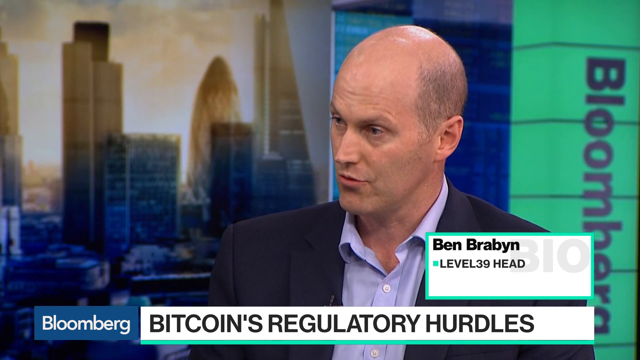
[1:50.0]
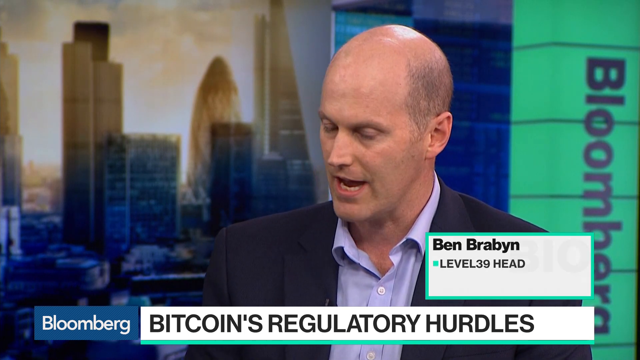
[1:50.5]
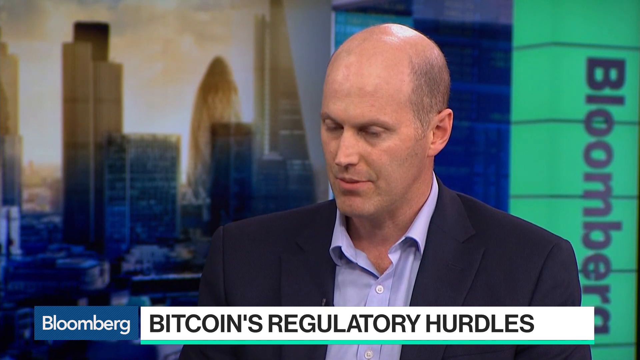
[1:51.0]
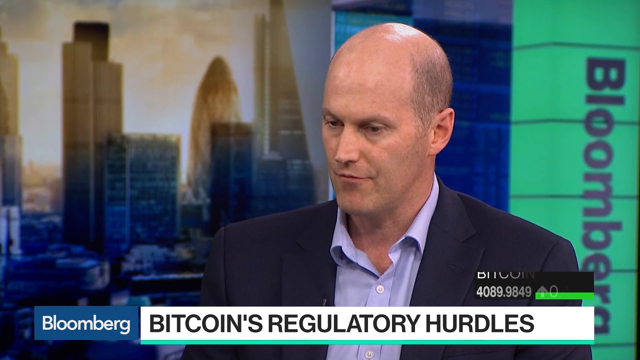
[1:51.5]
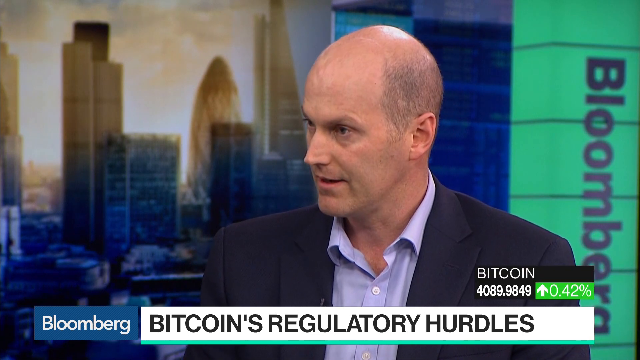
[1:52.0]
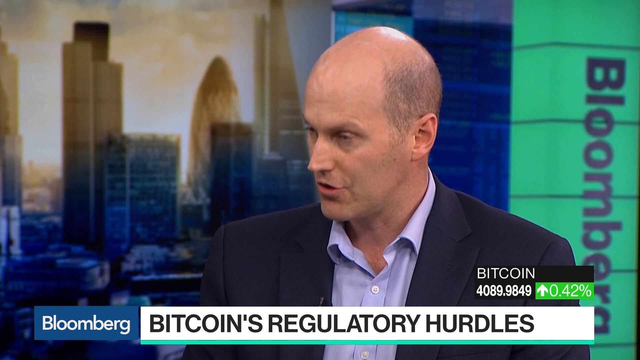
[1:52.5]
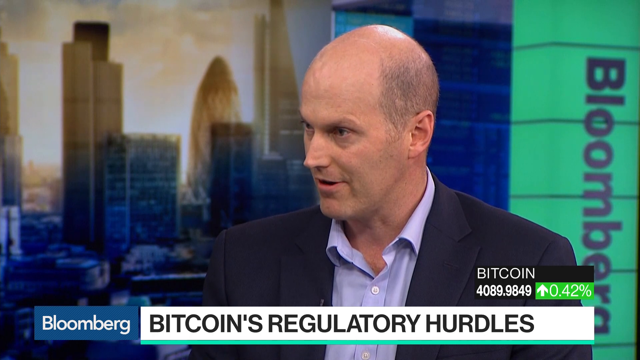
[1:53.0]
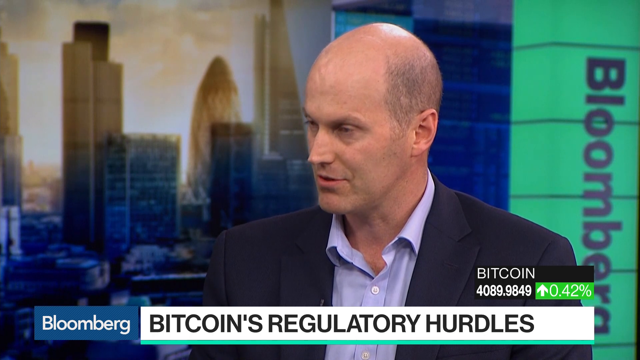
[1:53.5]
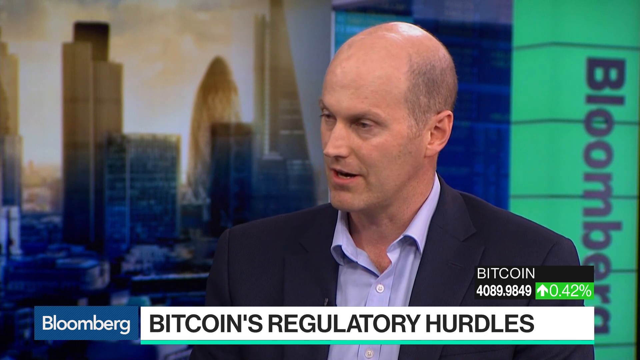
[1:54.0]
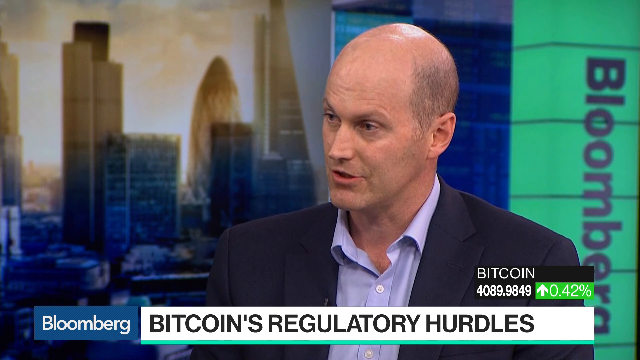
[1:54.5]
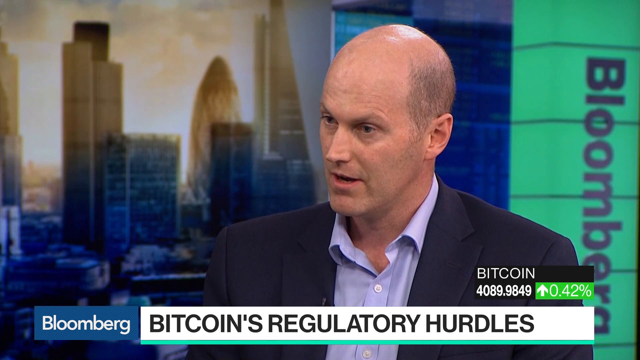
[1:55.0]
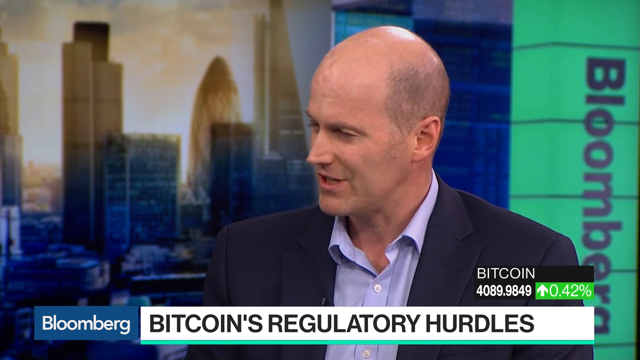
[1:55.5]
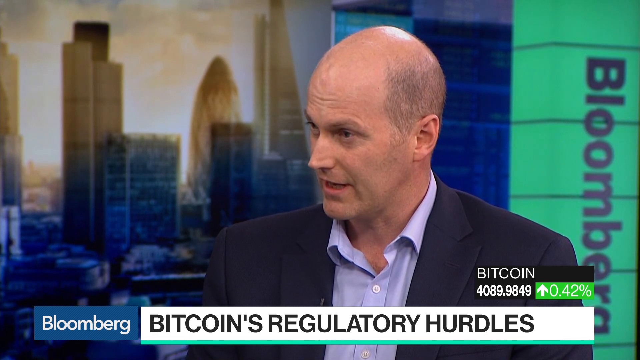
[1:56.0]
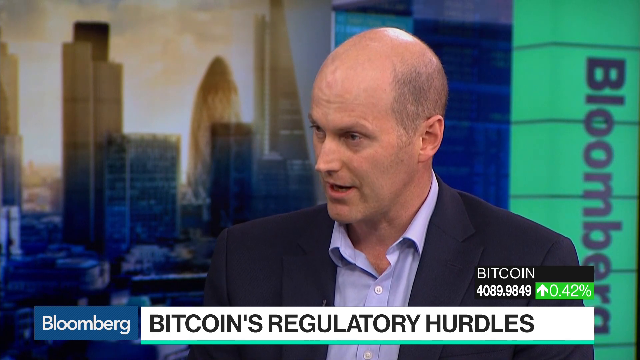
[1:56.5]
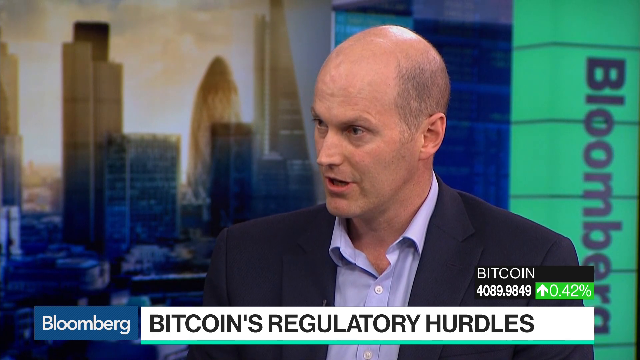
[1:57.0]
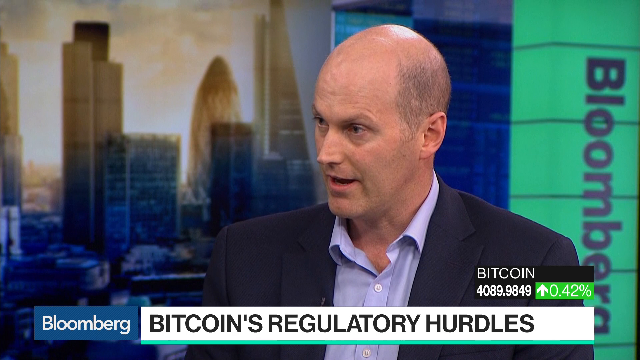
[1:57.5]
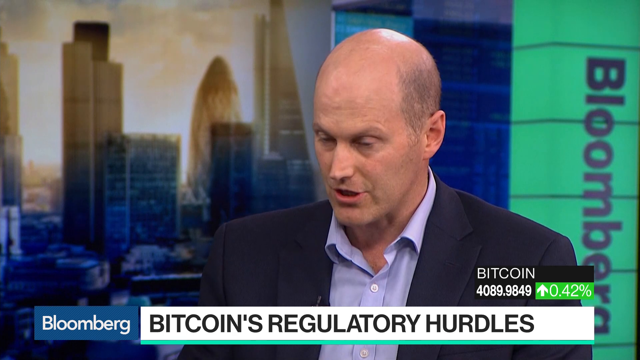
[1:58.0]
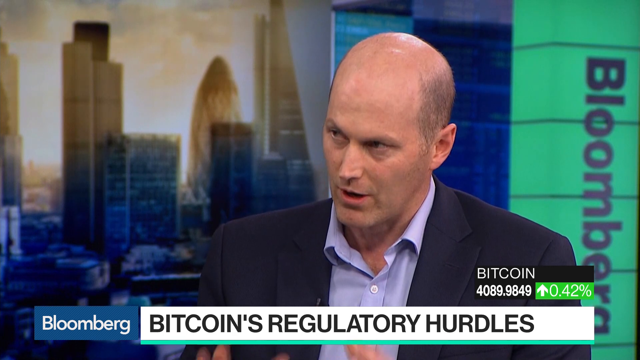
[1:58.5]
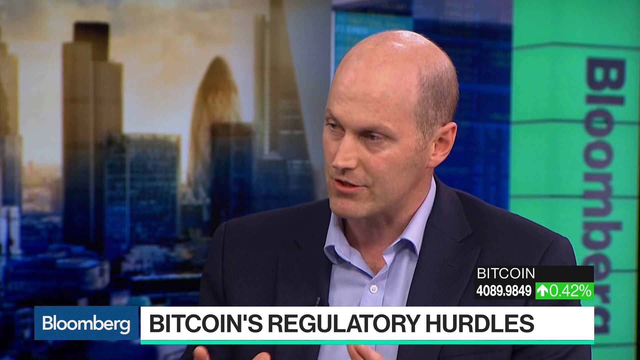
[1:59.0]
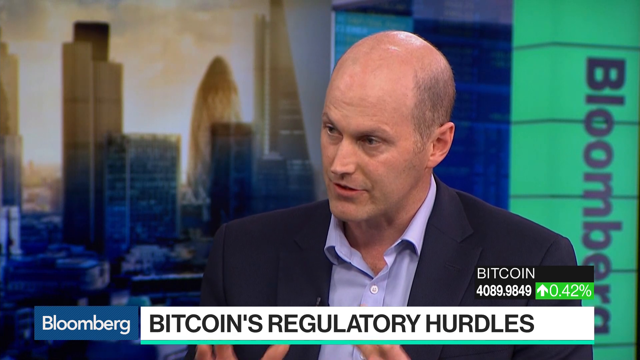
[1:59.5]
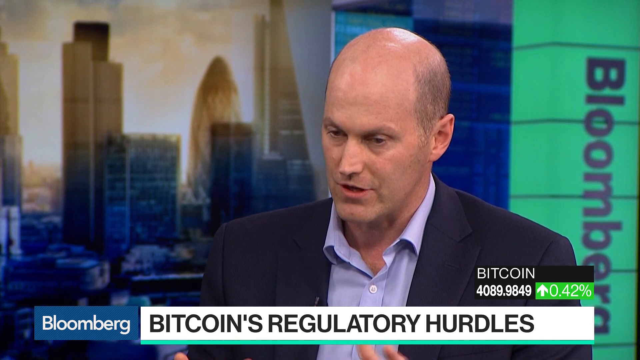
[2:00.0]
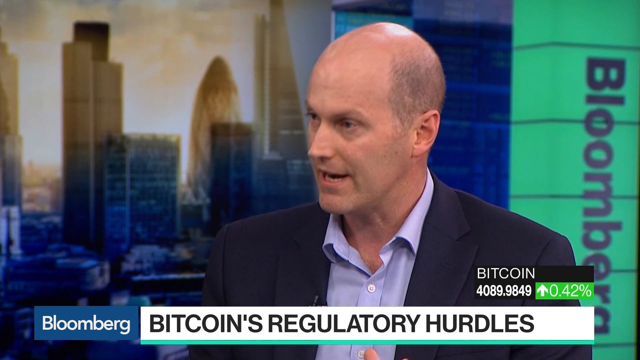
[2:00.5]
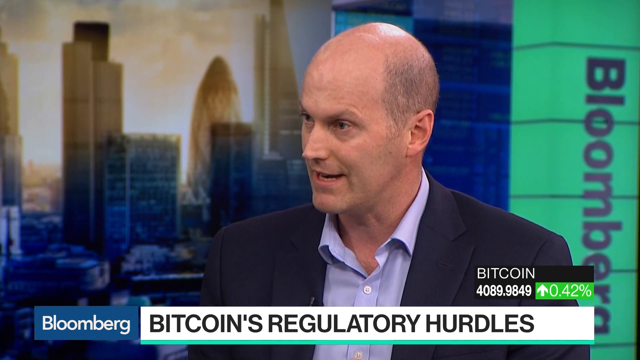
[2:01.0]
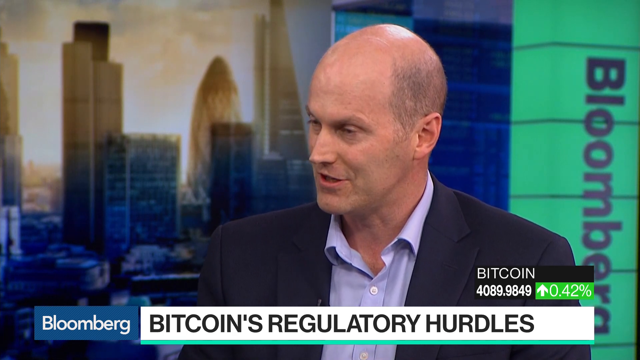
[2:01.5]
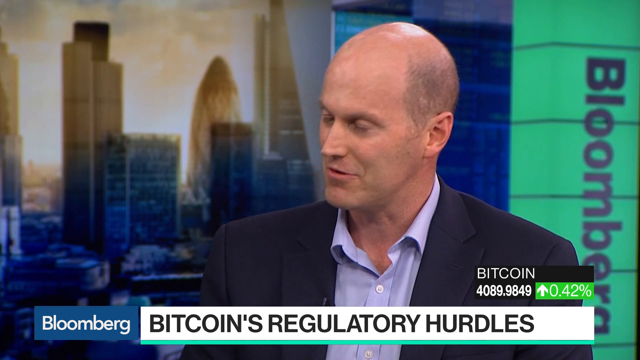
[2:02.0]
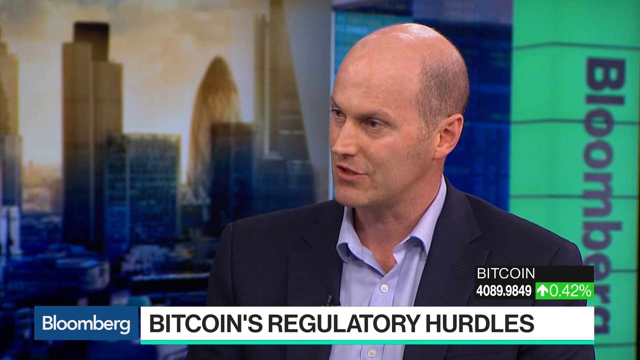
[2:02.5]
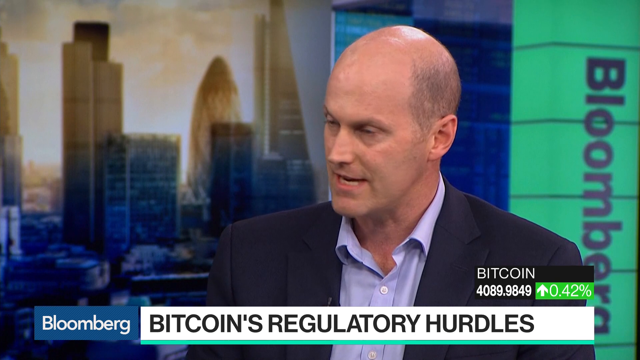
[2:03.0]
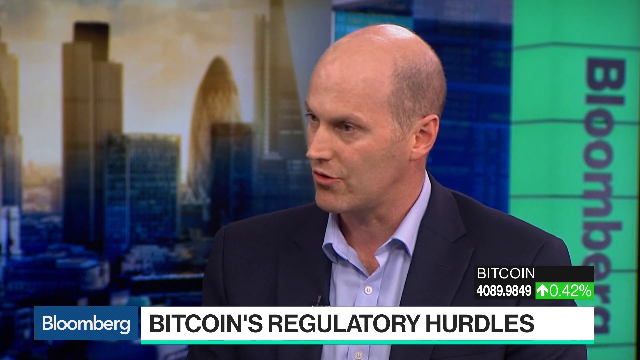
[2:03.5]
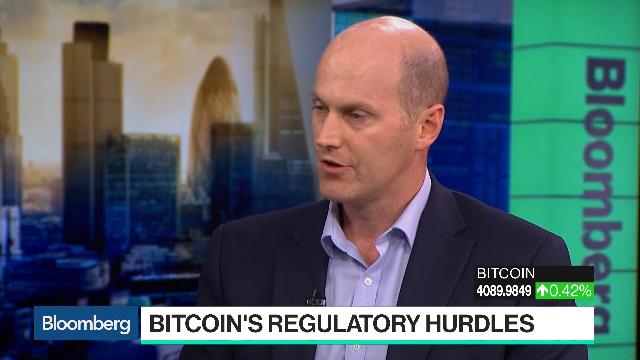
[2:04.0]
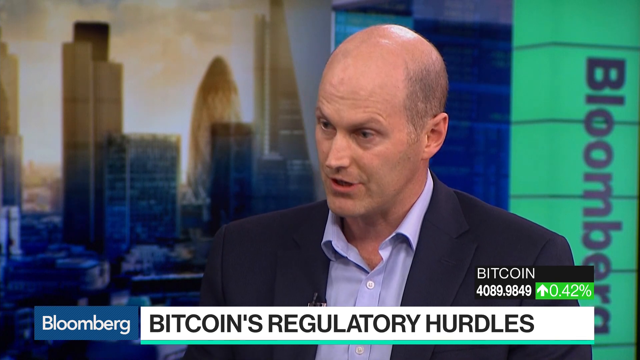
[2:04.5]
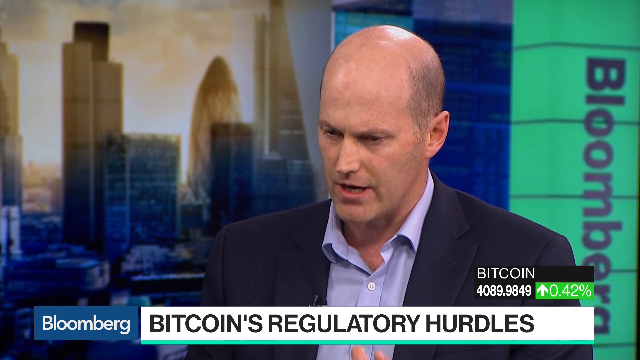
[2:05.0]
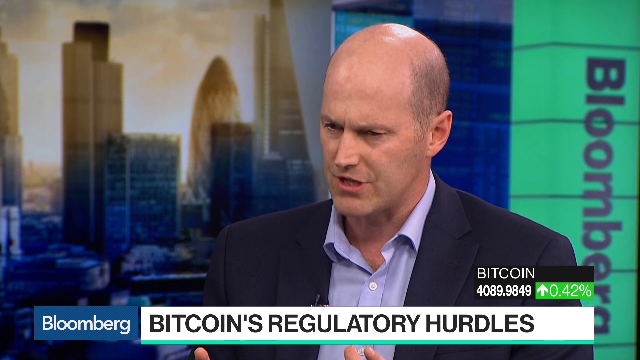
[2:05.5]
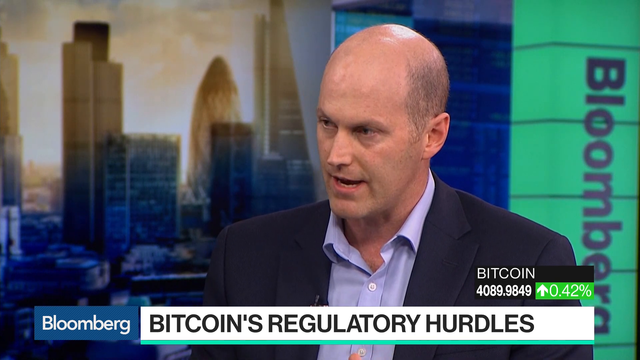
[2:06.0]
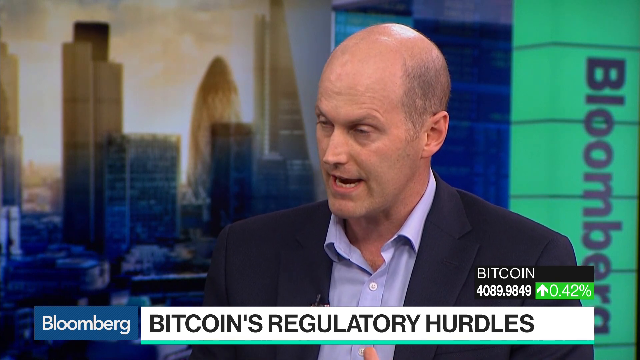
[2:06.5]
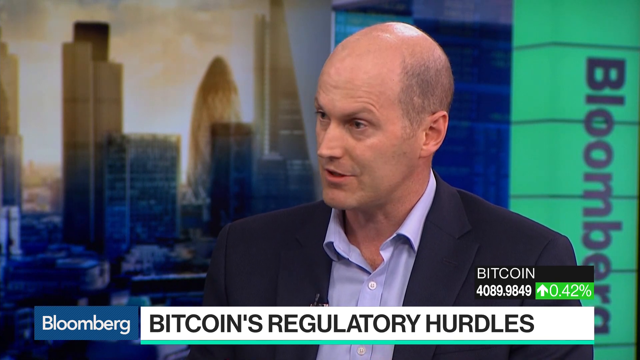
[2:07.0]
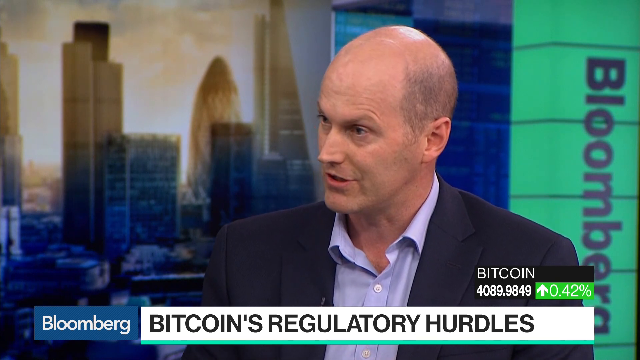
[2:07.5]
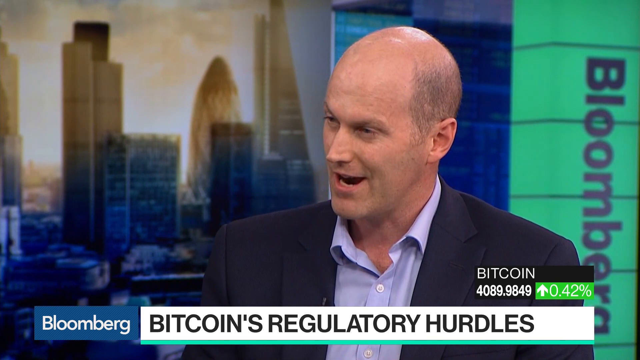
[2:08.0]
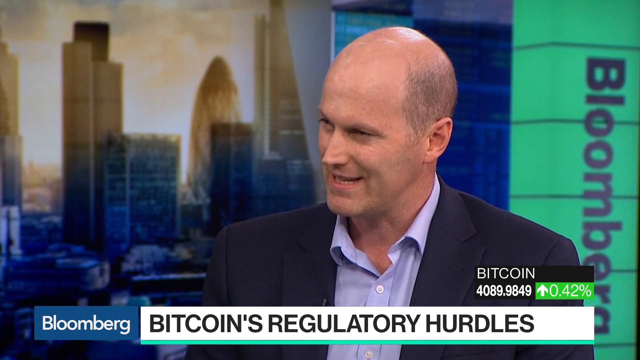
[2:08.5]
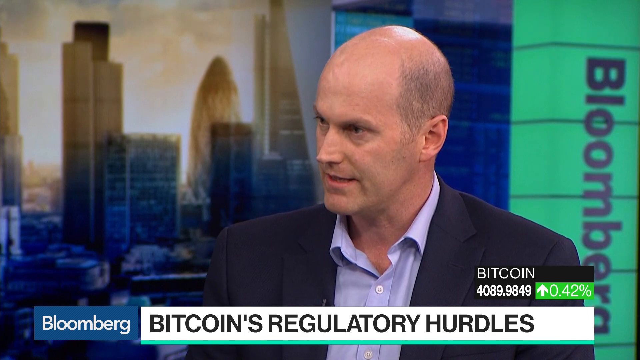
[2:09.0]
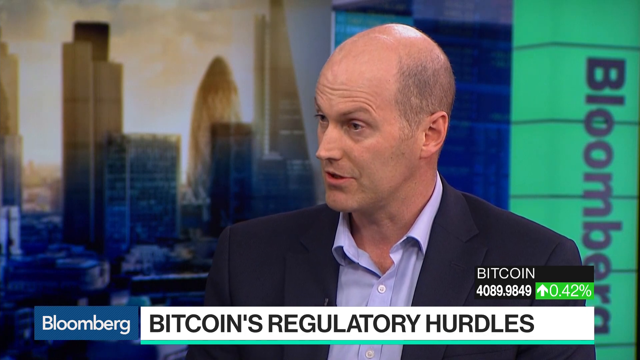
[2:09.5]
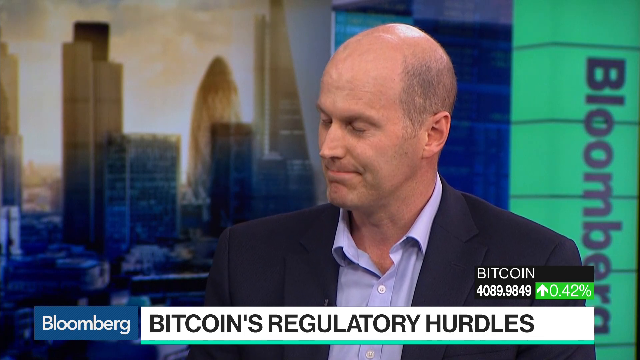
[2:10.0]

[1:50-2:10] Ben Brabyn still appears to be talking on screen, in the same news studio, with the London buildings in the background. There is a Bloomberg caption, and another caption reads "Bitcoin's regulatory hurdles." Bitcoin information reads "Bitcoin 40899849," with a green sign beside it saying it has risen by 0.42%. He still wears the black jacket with the blue shirt, still appears to be bald, and appears to be somewhere in his late 40s to early 50s. He seems to be talking briefly as the video ends.